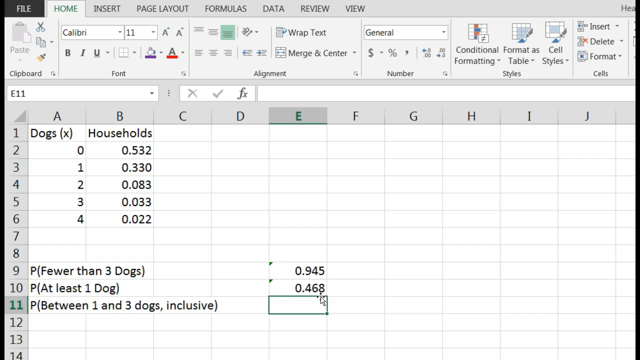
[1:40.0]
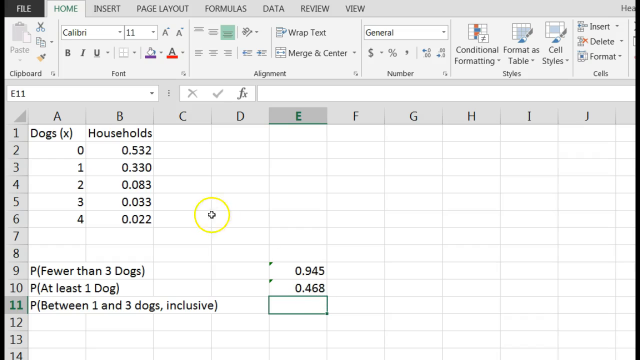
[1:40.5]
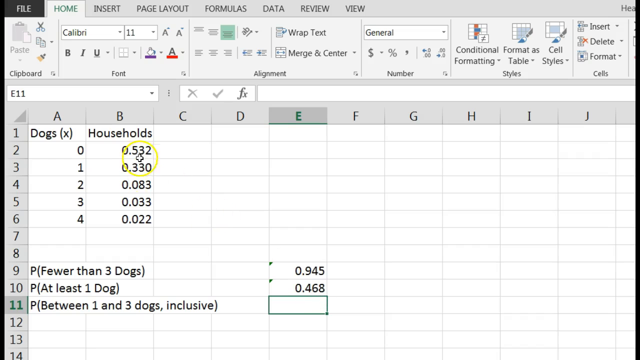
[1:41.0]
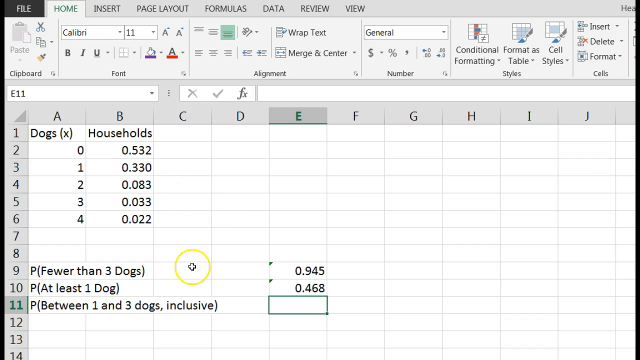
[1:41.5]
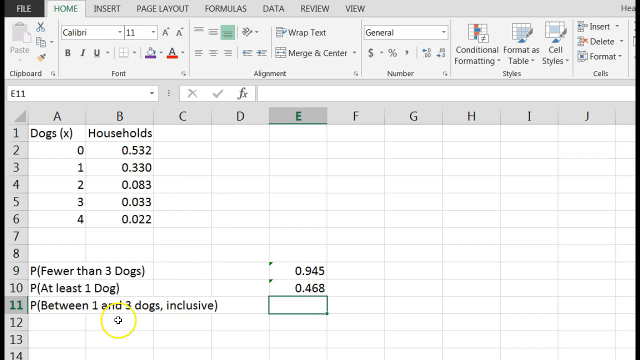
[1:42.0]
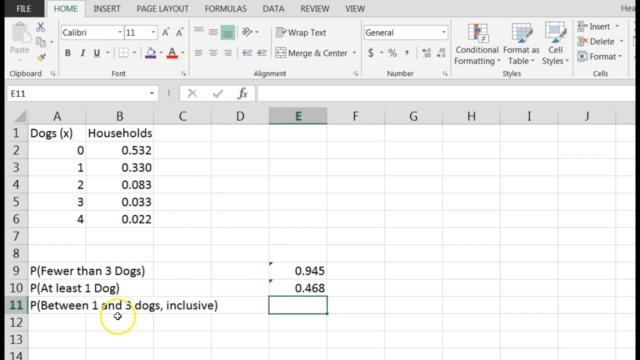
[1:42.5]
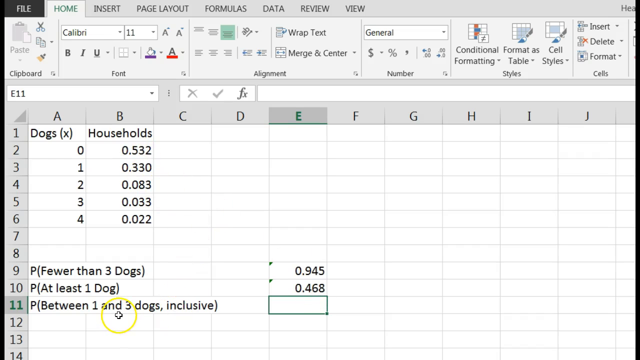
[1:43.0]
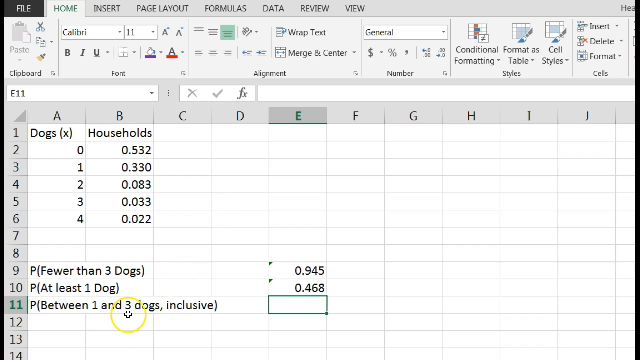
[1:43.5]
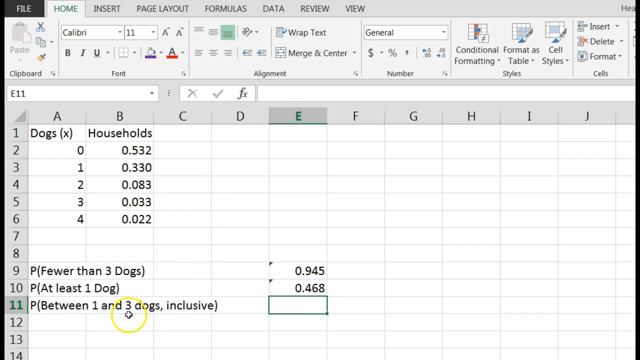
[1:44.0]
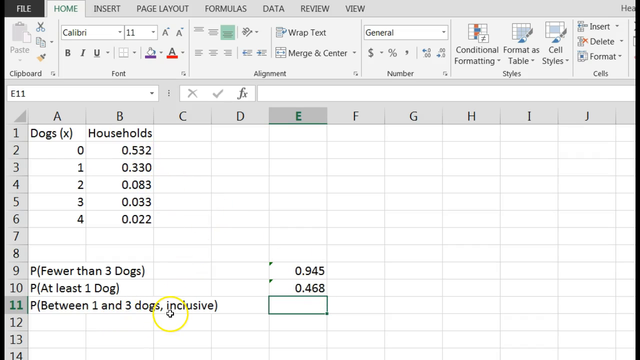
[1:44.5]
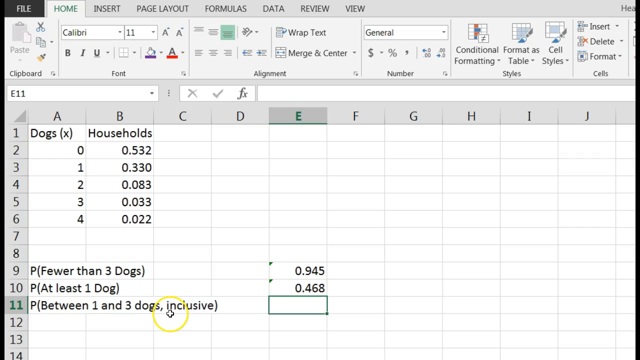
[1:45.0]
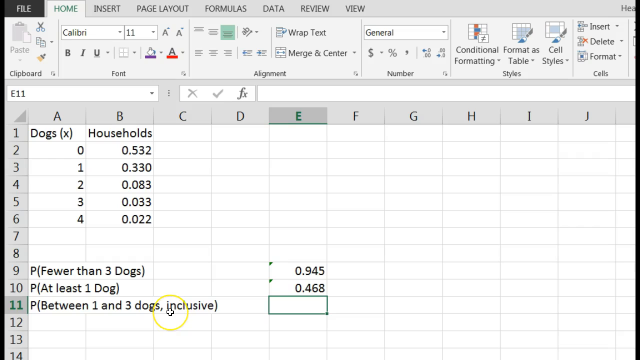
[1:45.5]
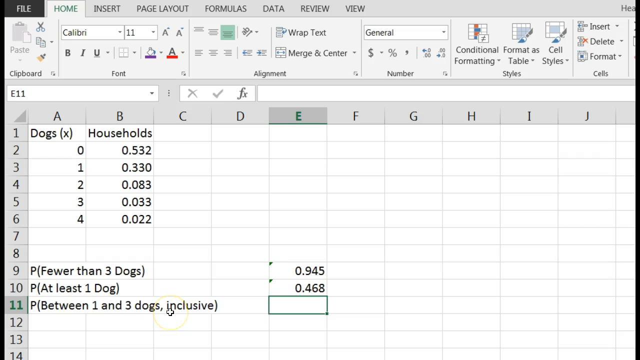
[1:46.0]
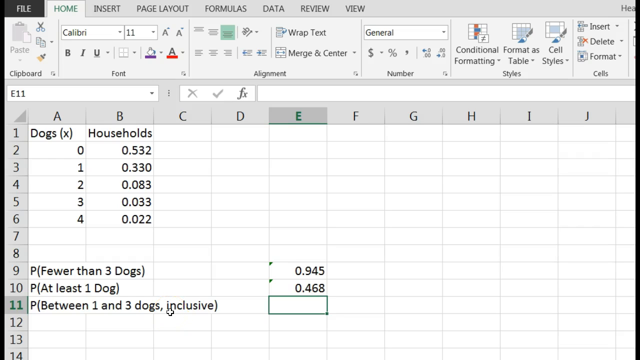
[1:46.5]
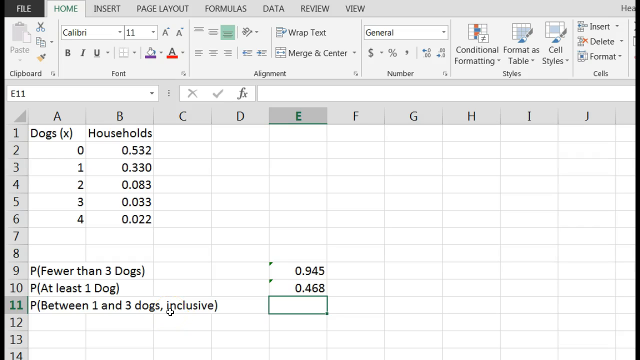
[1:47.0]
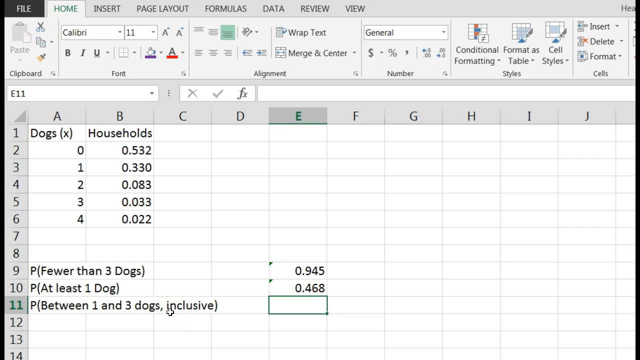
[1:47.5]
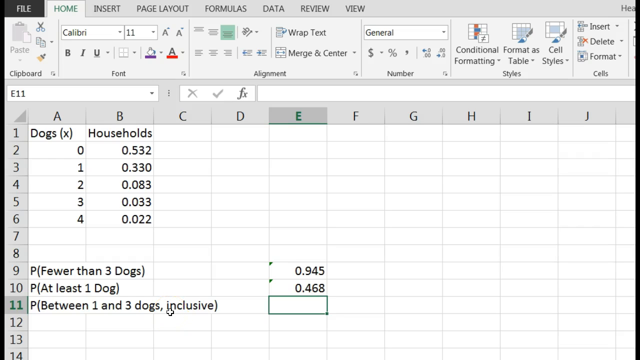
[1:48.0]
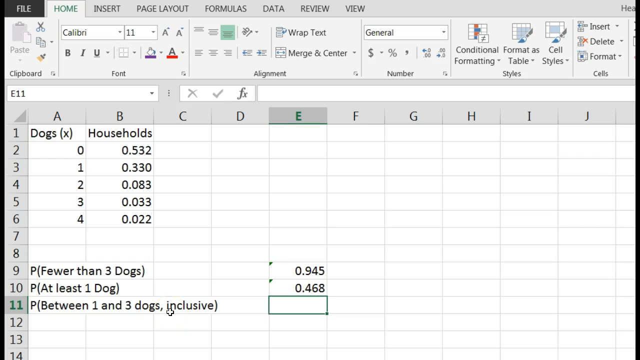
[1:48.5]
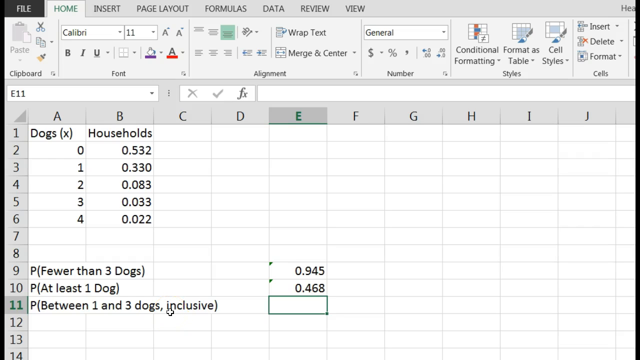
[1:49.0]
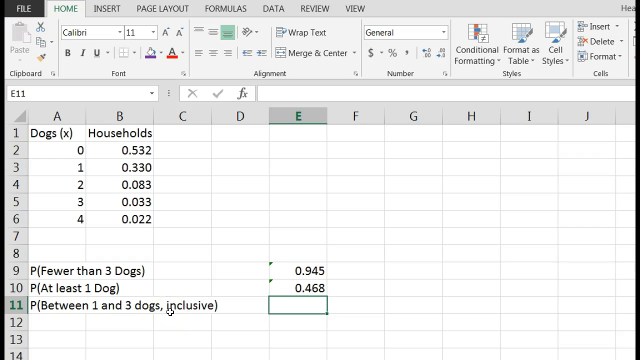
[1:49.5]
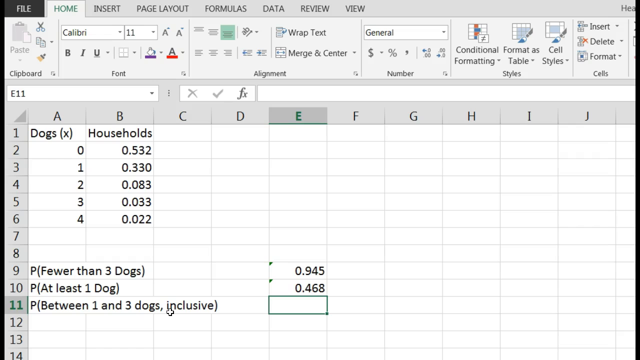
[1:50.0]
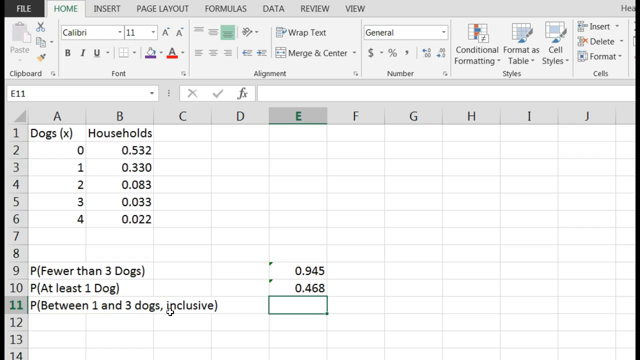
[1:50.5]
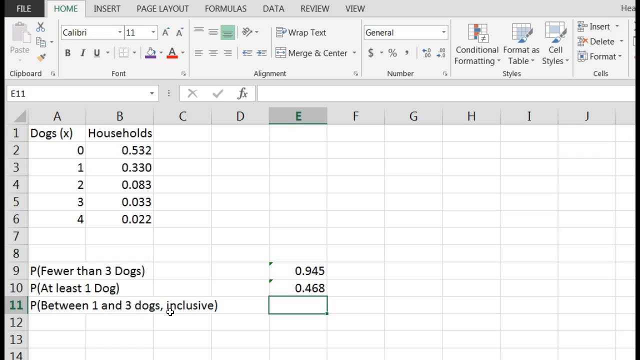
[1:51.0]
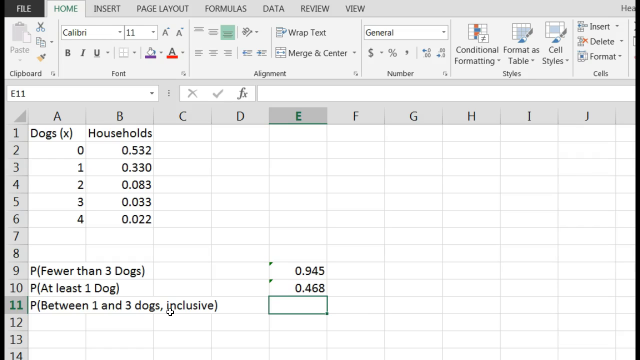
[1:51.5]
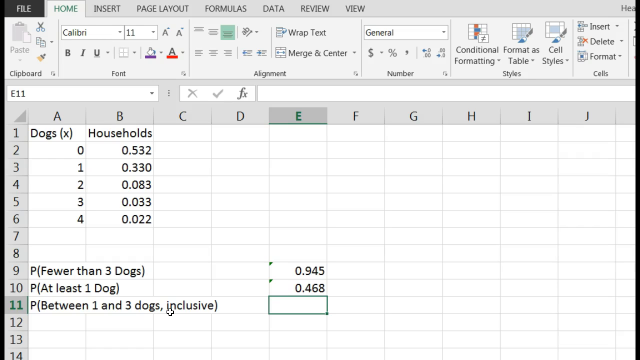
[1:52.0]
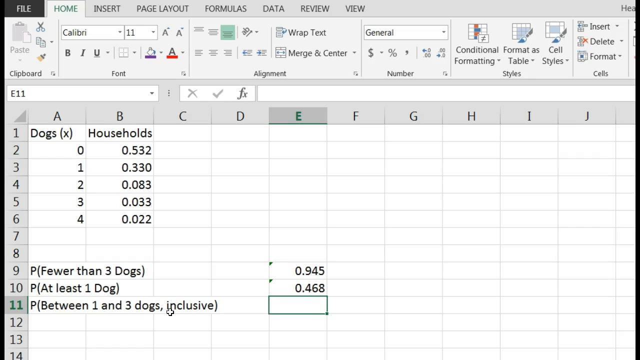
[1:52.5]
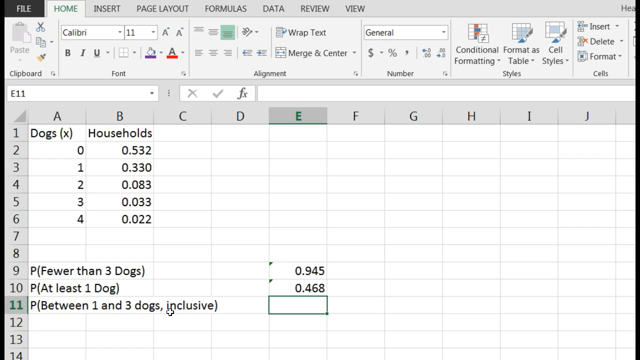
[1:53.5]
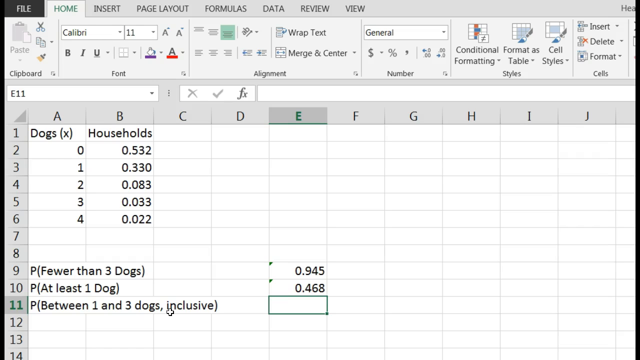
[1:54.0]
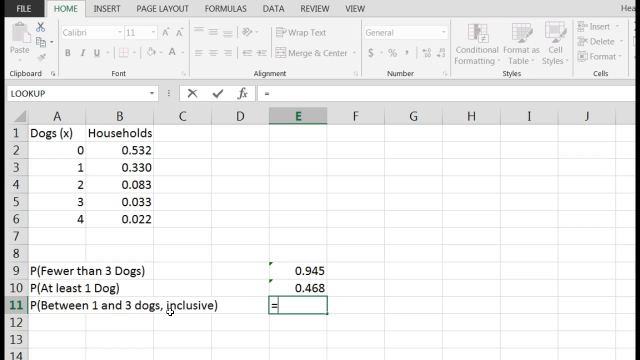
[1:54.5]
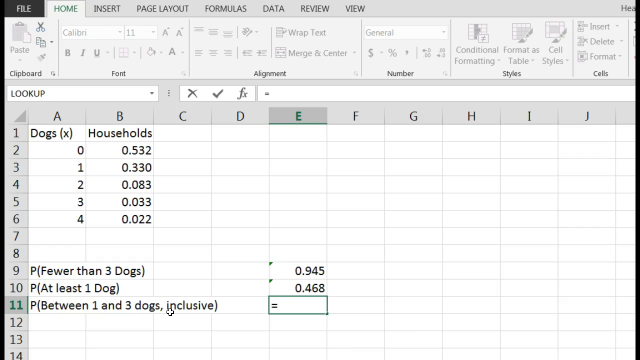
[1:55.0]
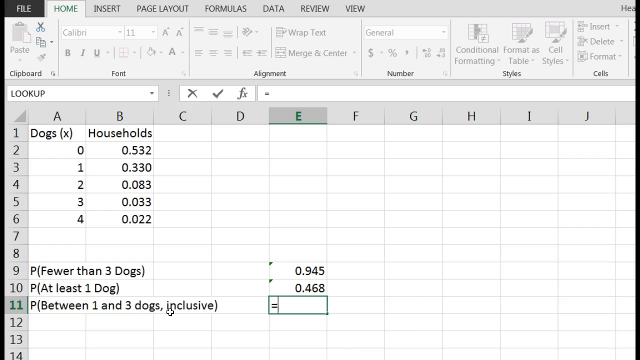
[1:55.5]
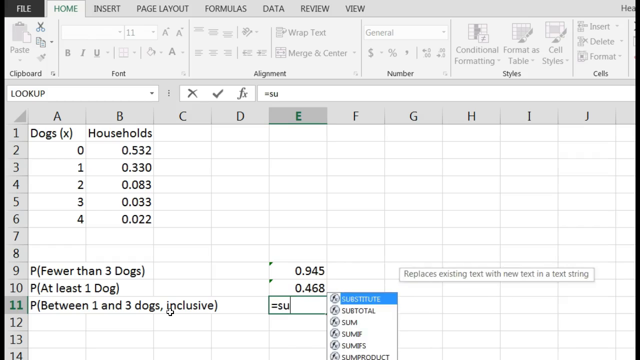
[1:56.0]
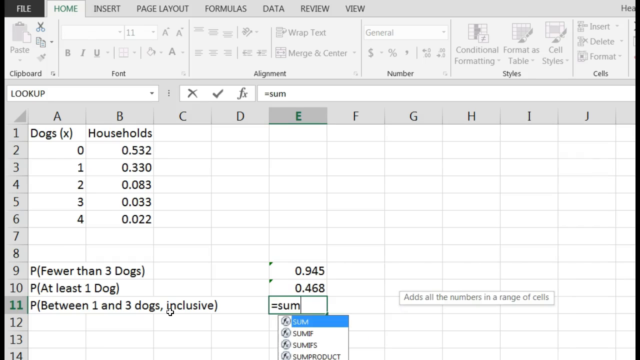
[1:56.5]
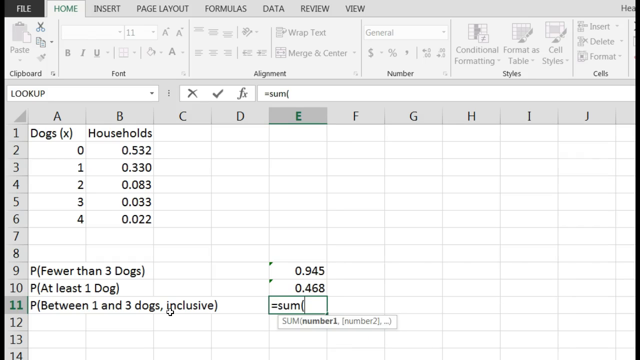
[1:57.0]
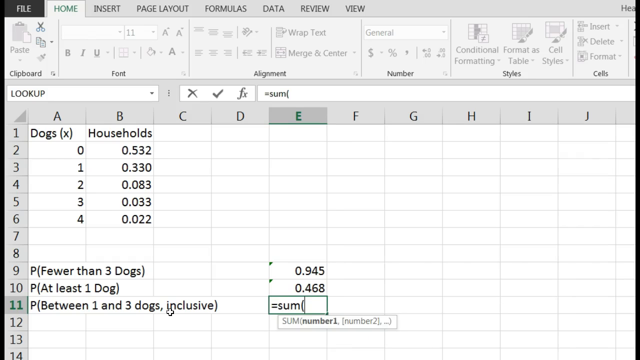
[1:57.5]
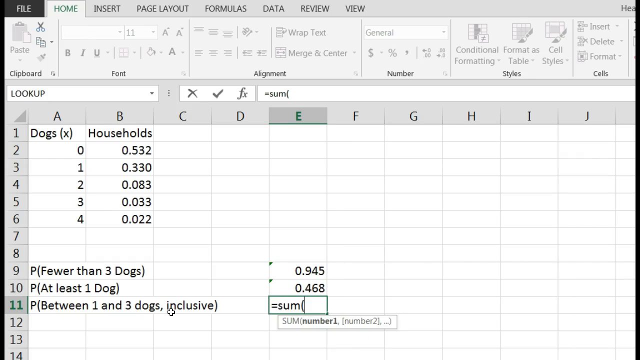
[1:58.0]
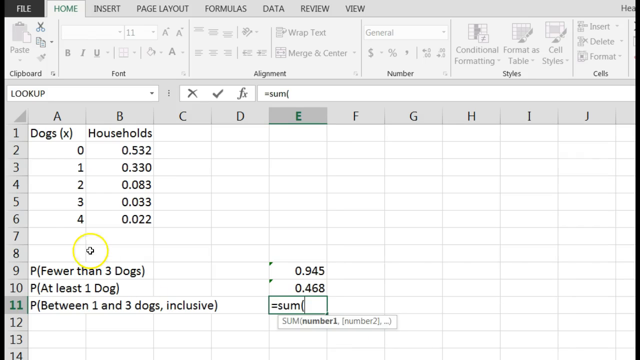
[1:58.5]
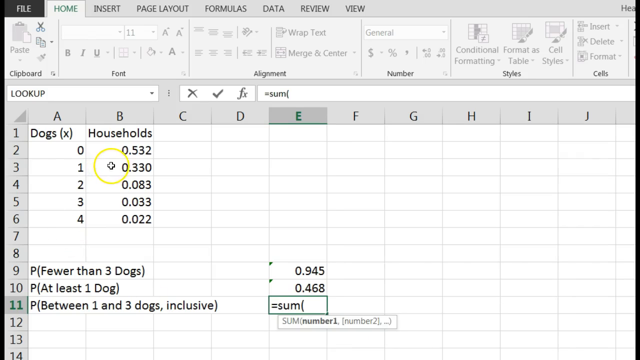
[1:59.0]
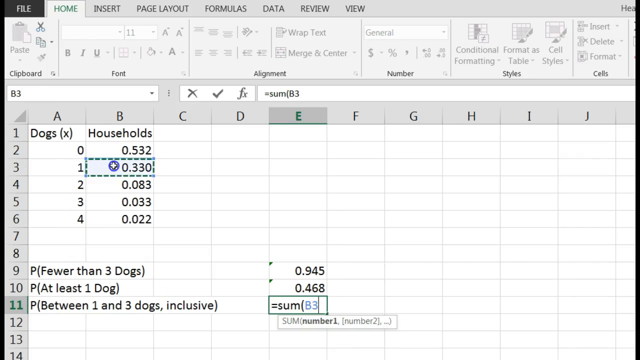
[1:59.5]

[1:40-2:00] E9 and E10 are in view. The sums seem to have been taken of B2 through B4 and then, apparently overlapping, of B4 through B6. The 0.945 is across from "fewer than three dogs", and "at least one dog" has 0.468. Attention moves to between one and three inclusive. The cursor goes up toward households and then back down, holding over "inclusive" for a few seconds without doing anything. Equals sum is typed again, the pop-up appears at the bottom, and a box over G11 reads "all numbers in the range of cells". The parenthesis is started and B1 is highlighted, and green dots move around the border of the active cell.